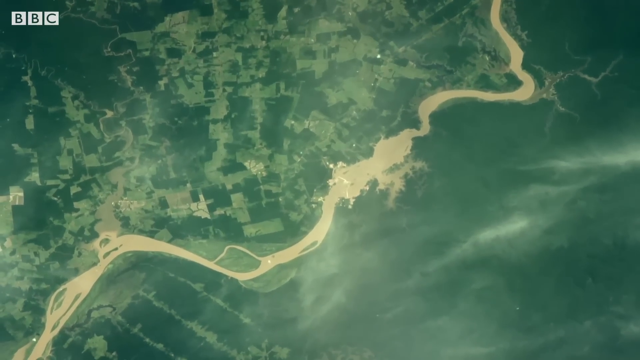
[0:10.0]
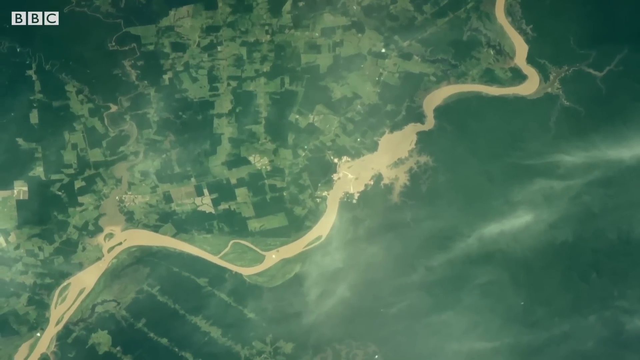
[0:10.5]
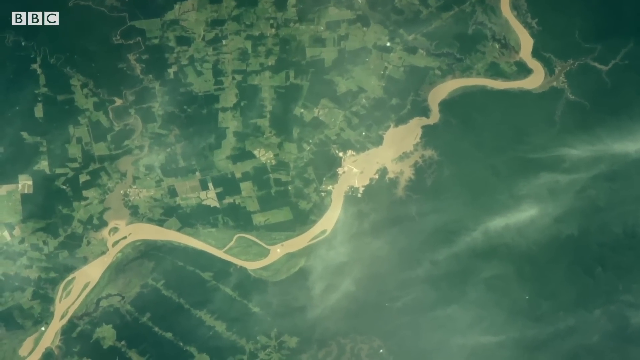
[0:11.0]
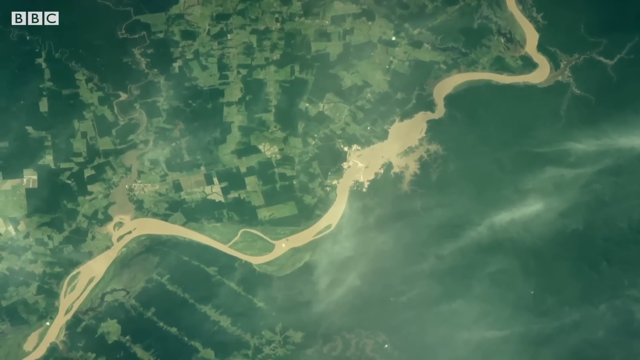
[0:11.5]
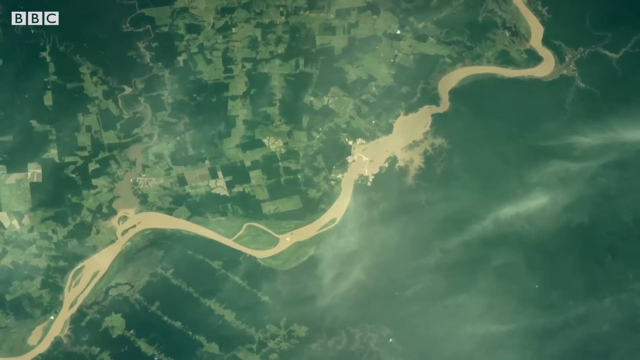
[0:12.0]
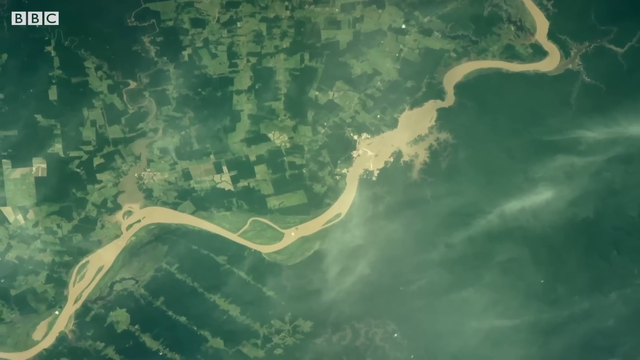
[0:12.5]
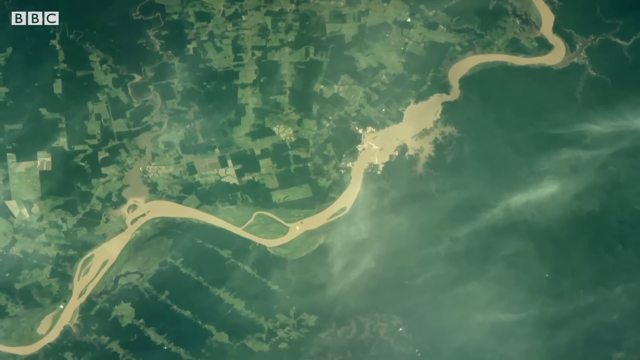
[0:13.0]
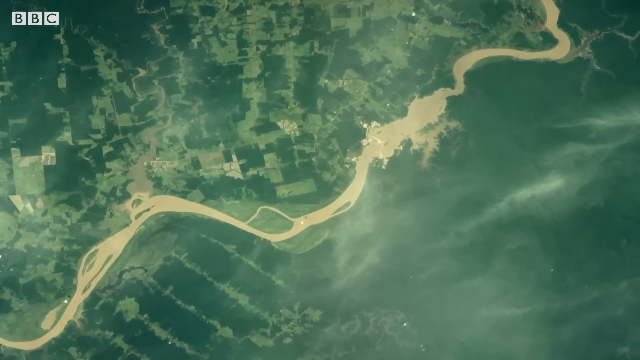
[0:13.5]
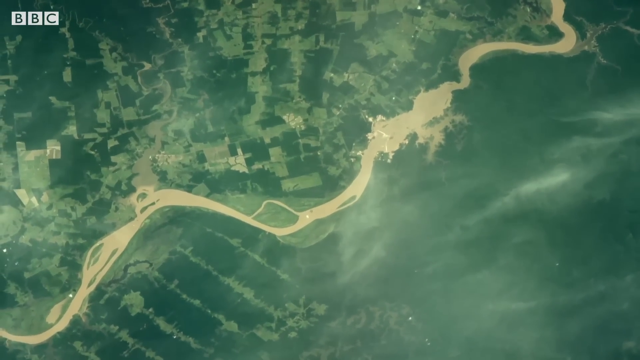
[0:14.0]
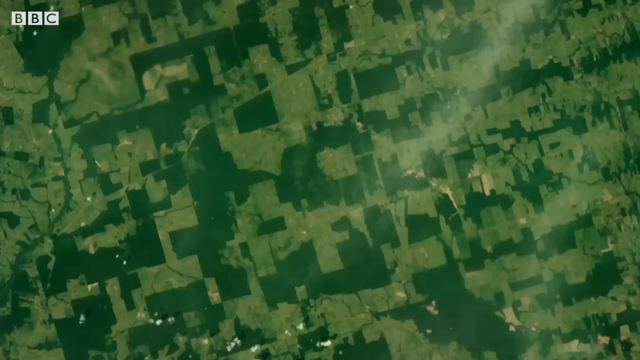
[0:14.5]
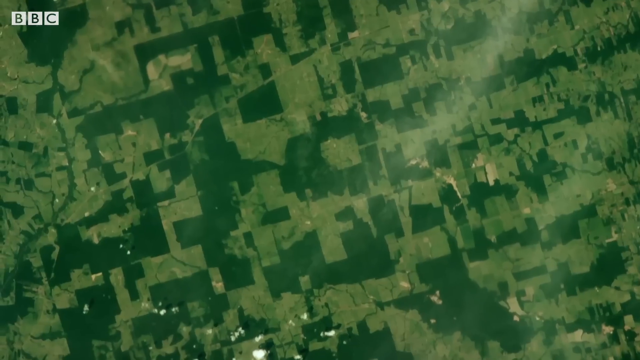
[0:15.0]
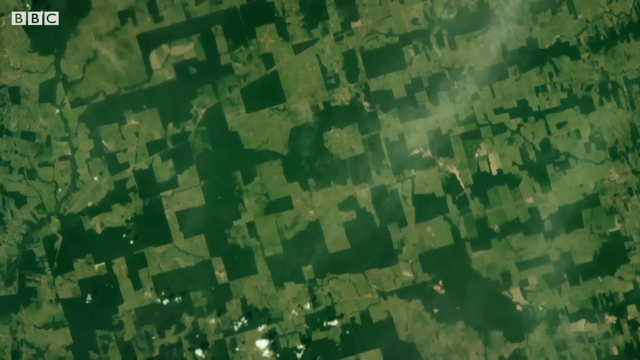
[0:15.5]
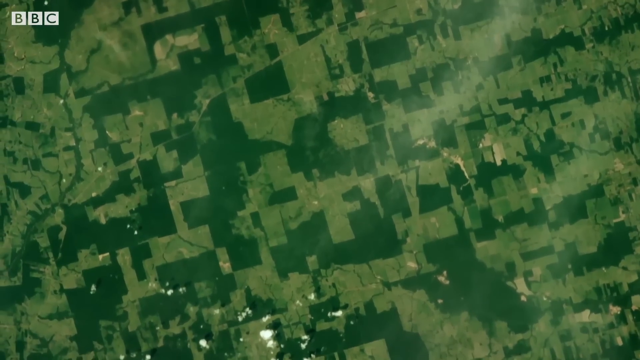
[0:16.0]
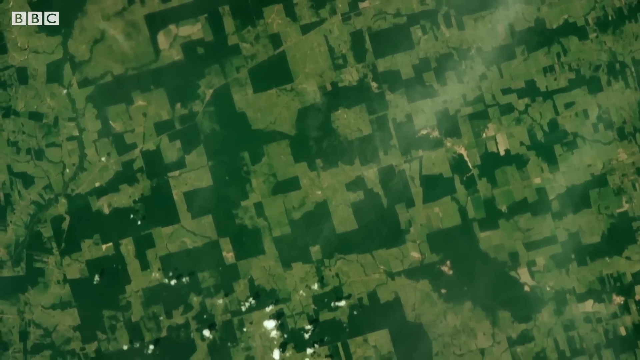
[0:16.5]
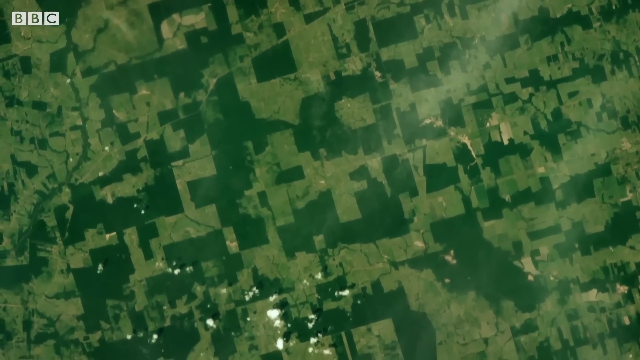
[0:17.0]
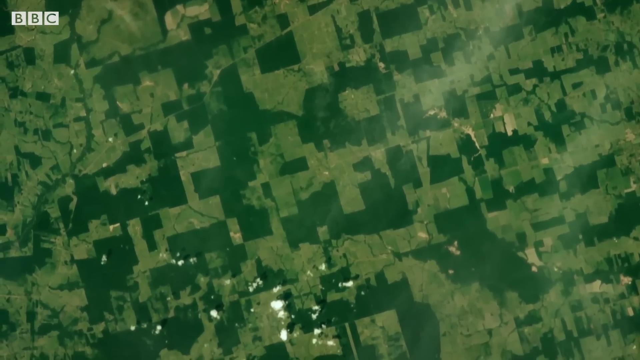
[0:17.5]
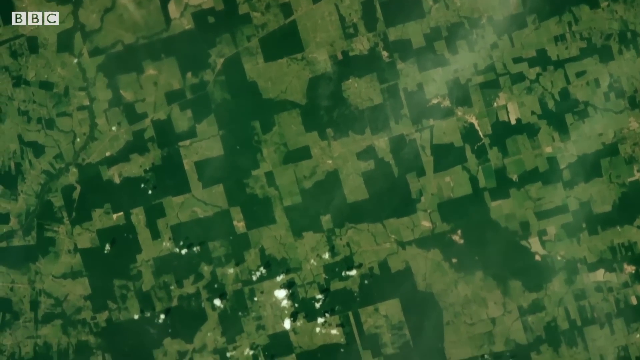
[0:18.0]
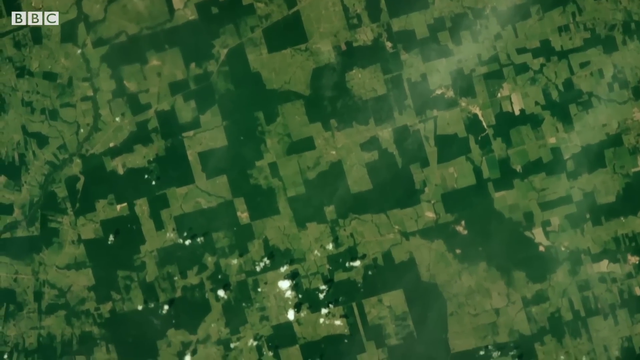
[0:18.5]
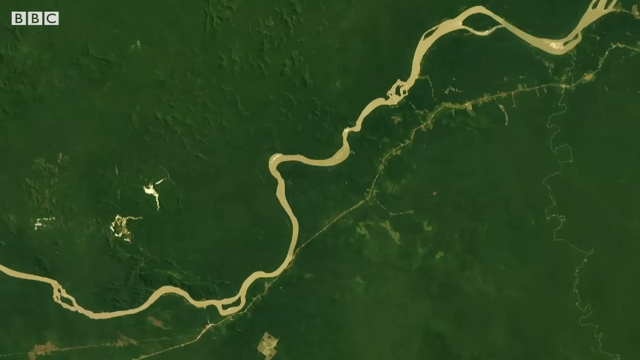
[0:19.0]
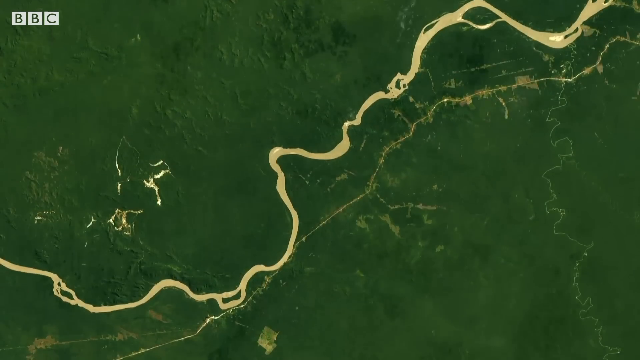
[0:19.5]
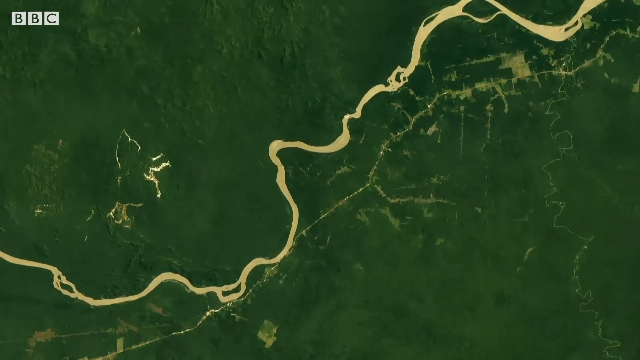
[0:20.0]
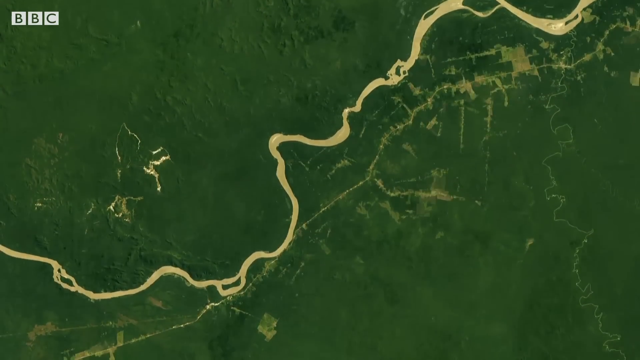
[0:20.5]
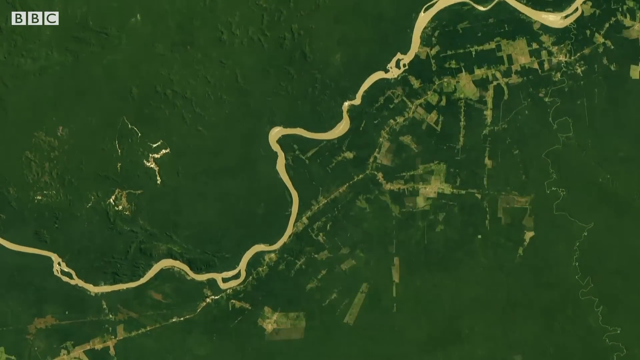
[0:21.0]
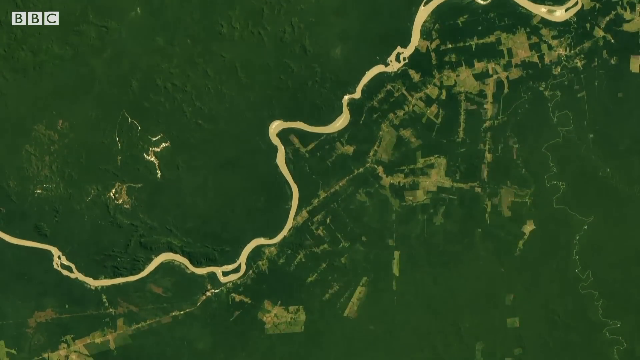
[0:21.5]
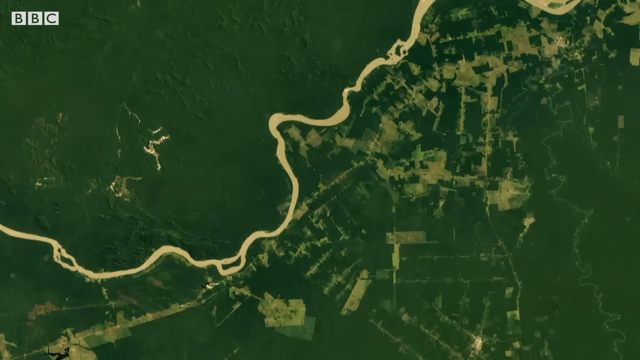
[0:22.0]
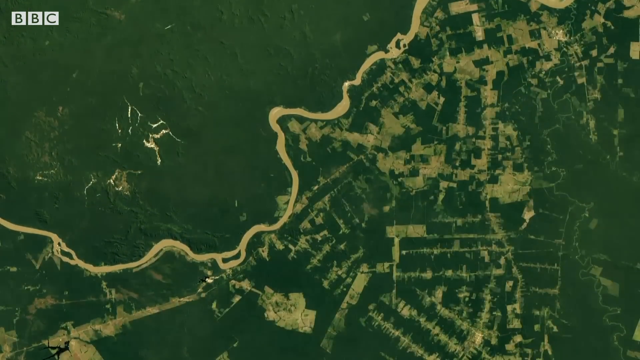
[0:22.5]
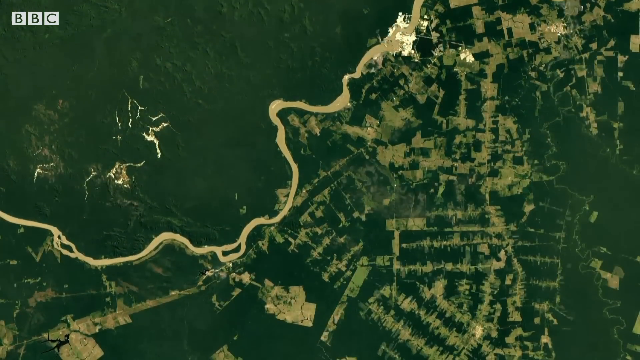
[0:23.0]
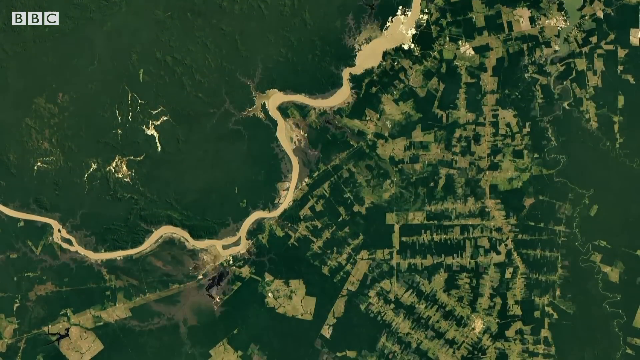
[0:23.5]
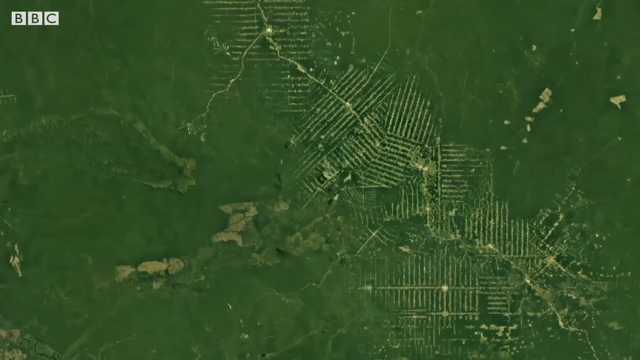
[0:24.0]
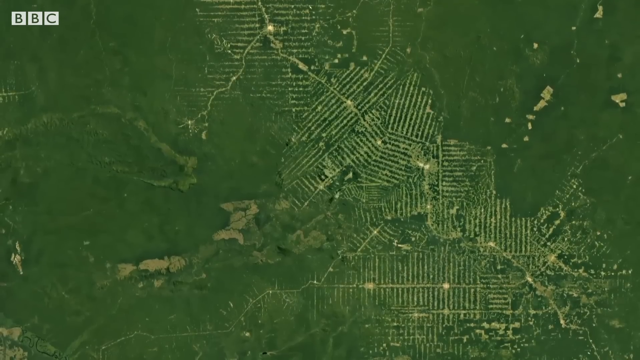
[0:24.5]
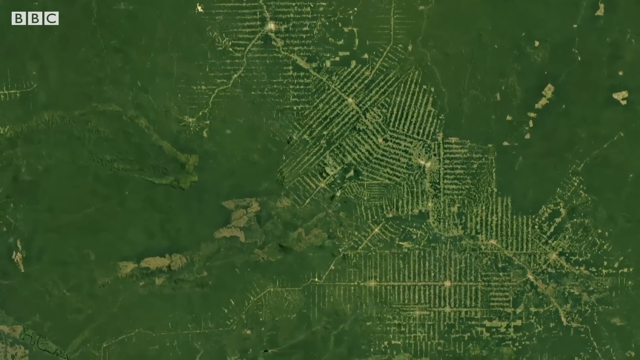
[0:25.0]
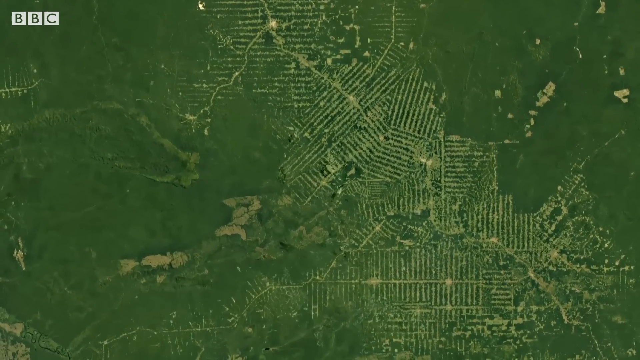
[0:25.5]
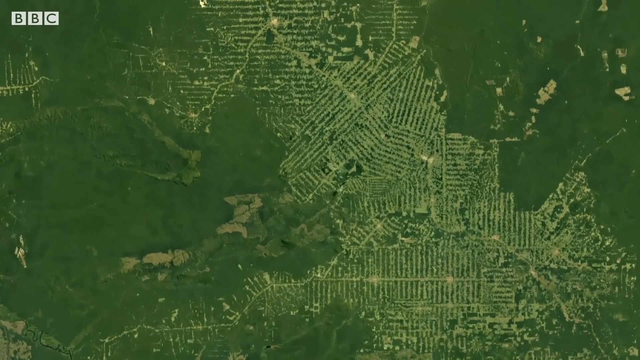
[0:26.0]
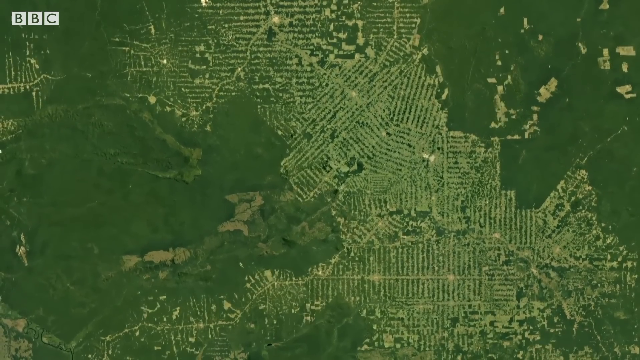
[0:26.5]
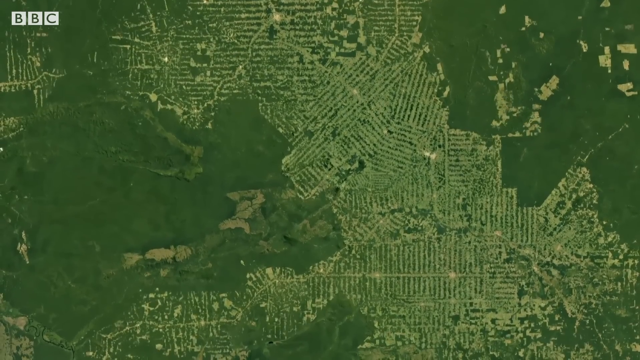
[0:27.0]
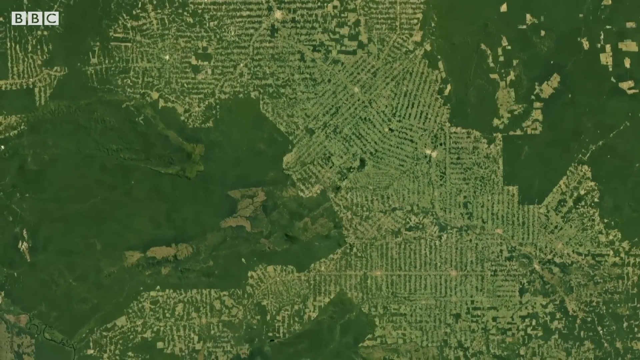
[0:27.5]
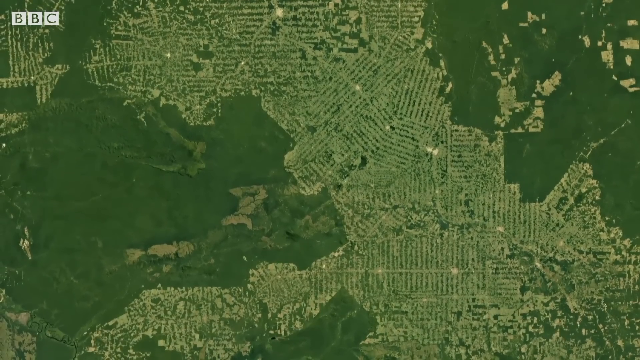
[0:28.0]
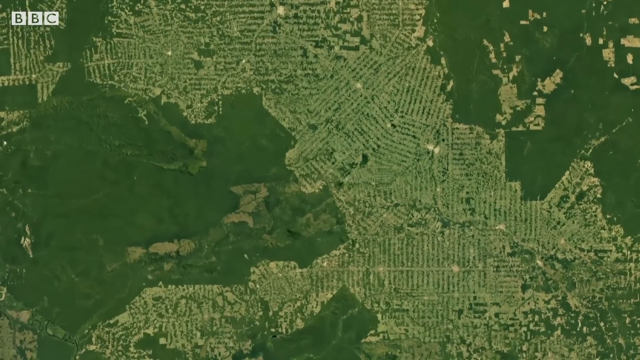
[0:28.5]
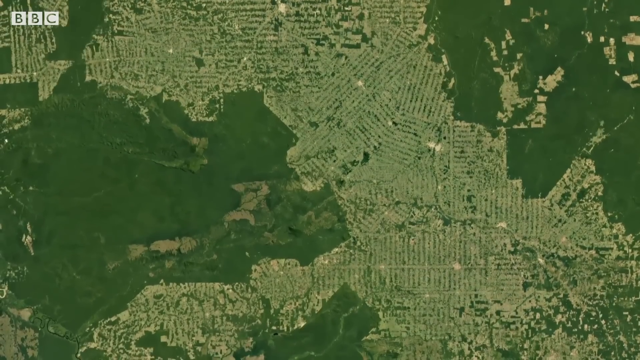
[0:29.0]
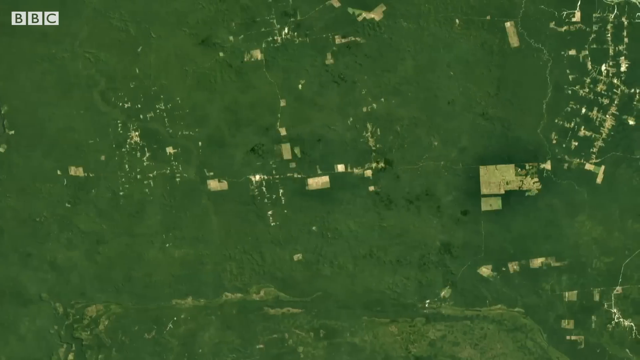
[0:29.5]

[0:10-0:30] The same sky view of the houses and the beach continues, then the view gets closer and closer to the surface, kind of like zooming in on the earth. After a transition, a closer view shows what looks like a bunch of grassy plains, with the grass casting many different shadows, almost as if they are buildings covered in grass. Then a sped-up progression shows an effect of this grass taking over the surface: it starts out very dark green, becomes less and less dark green, and certain parts turn a lighter yellow, almost as if it is spreading across the surface.